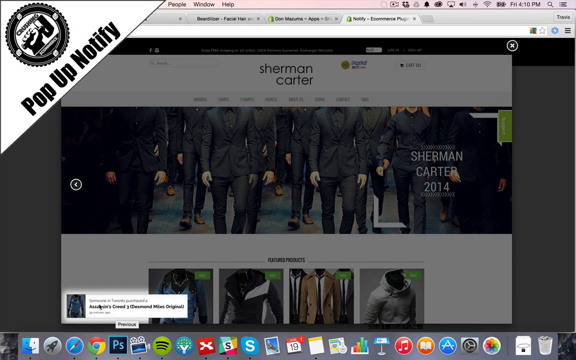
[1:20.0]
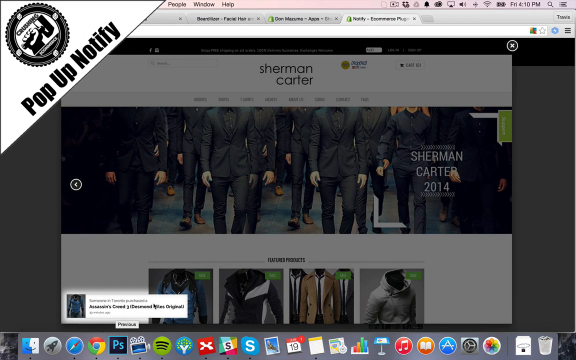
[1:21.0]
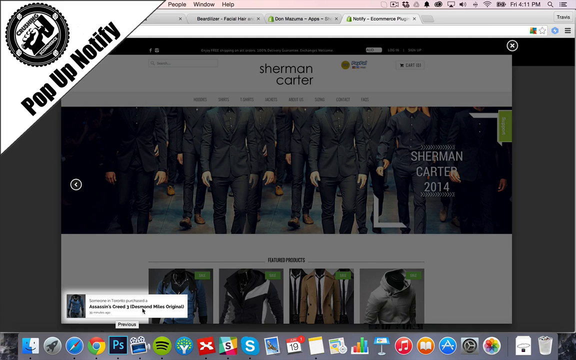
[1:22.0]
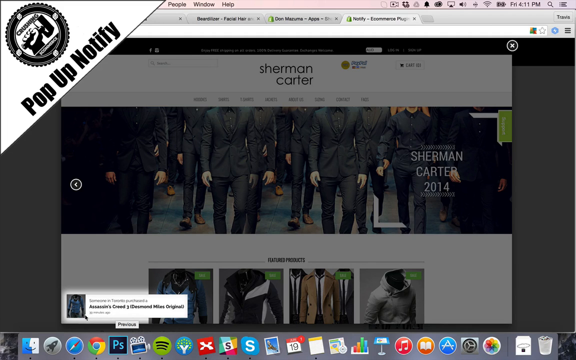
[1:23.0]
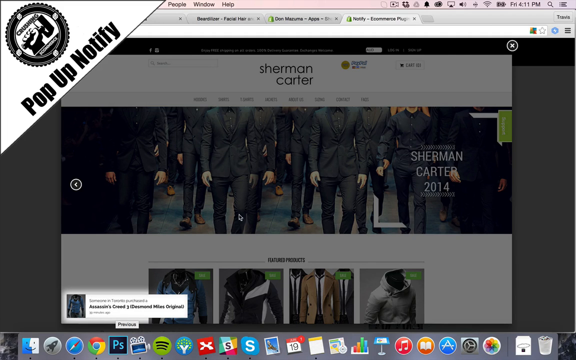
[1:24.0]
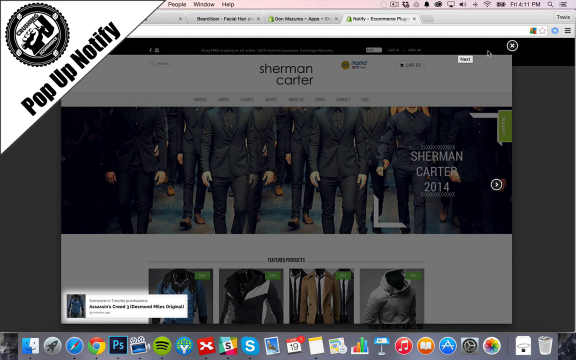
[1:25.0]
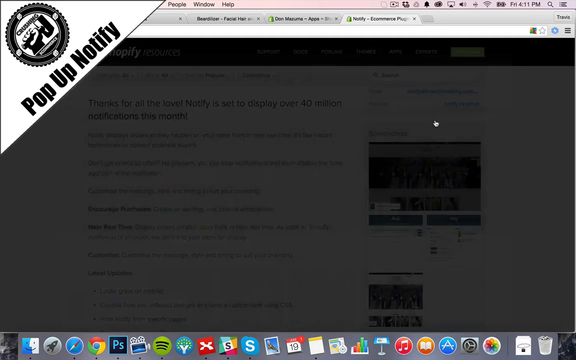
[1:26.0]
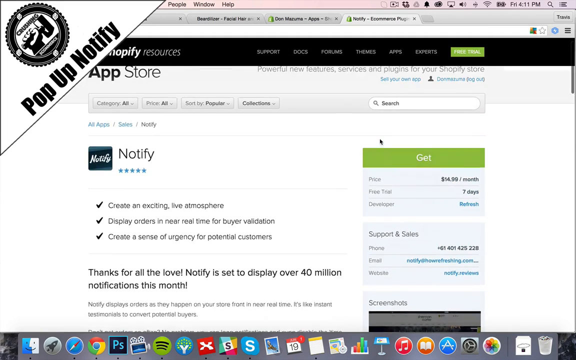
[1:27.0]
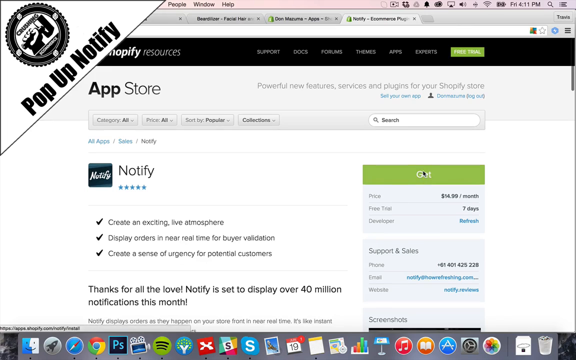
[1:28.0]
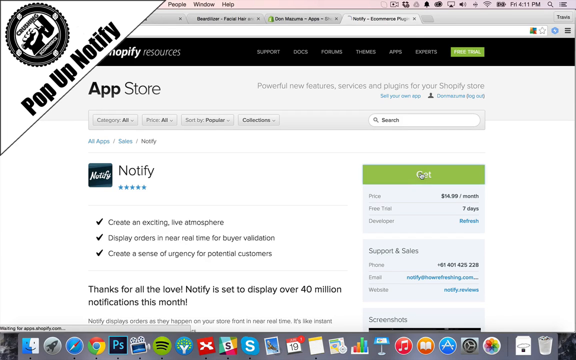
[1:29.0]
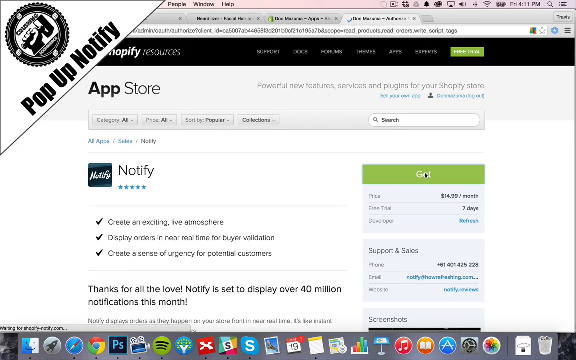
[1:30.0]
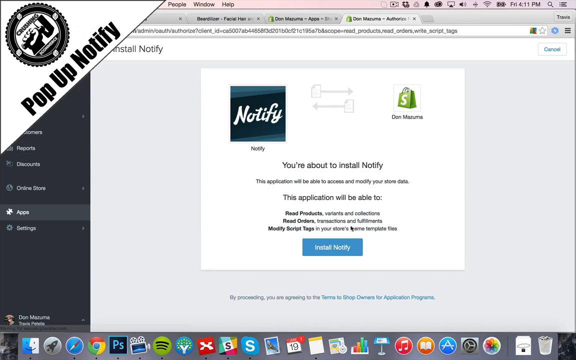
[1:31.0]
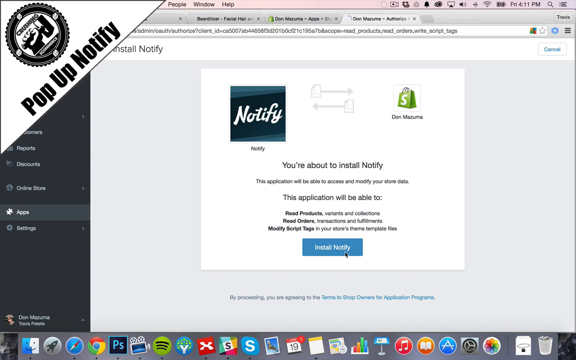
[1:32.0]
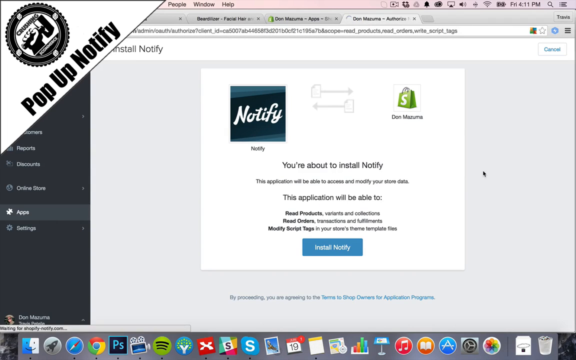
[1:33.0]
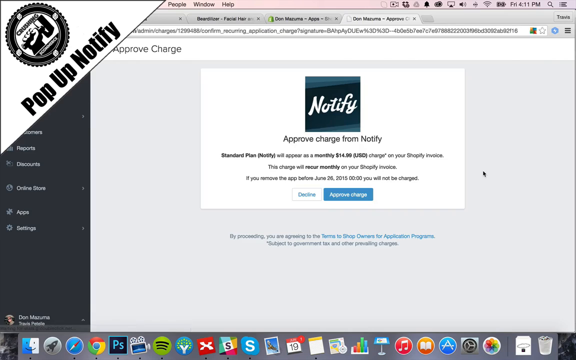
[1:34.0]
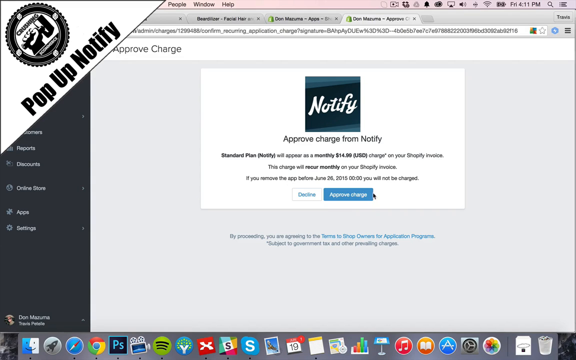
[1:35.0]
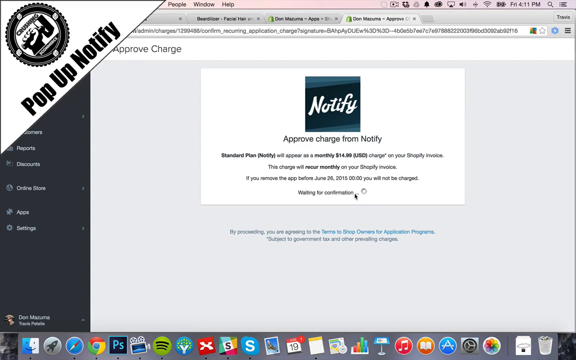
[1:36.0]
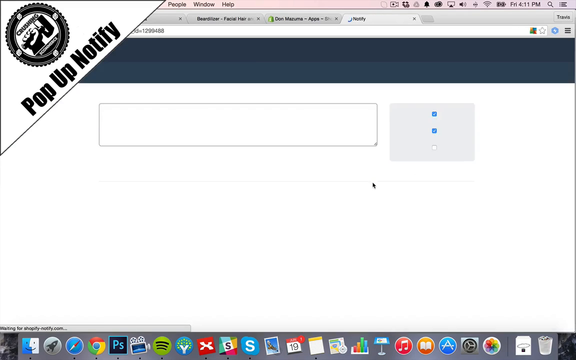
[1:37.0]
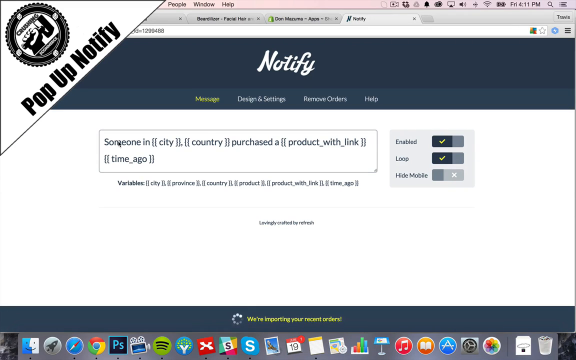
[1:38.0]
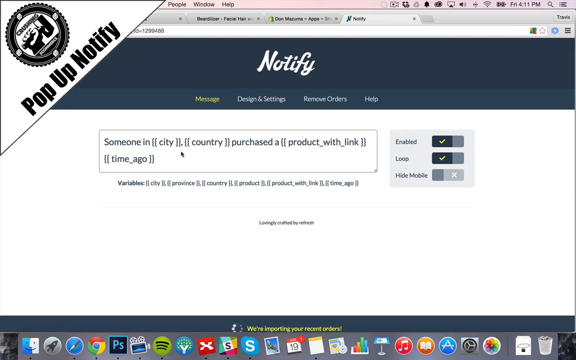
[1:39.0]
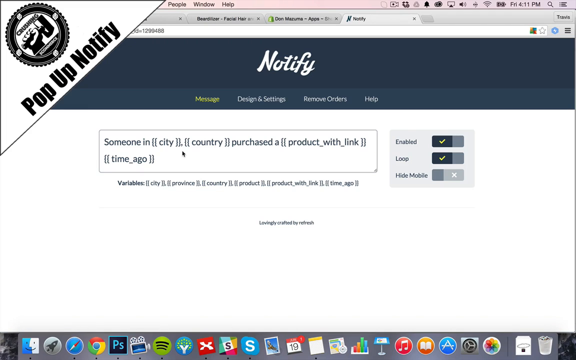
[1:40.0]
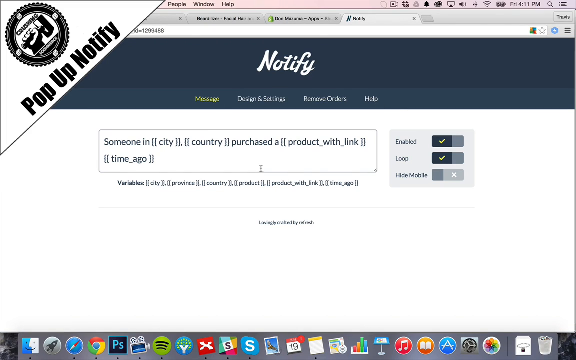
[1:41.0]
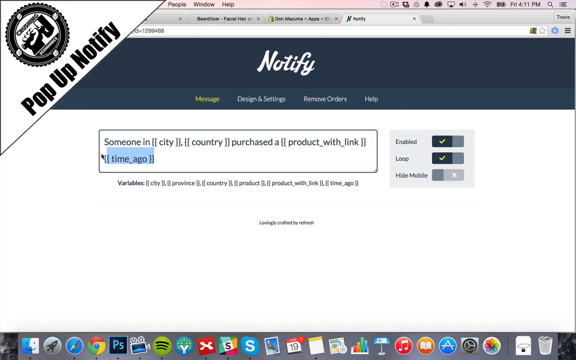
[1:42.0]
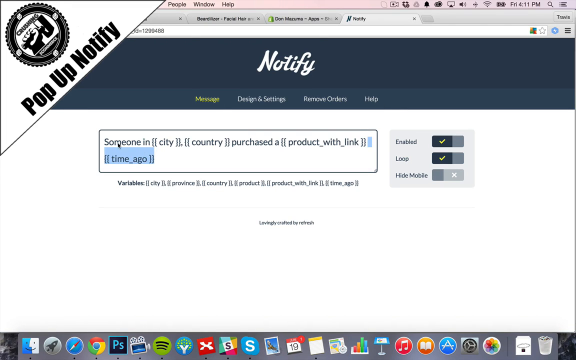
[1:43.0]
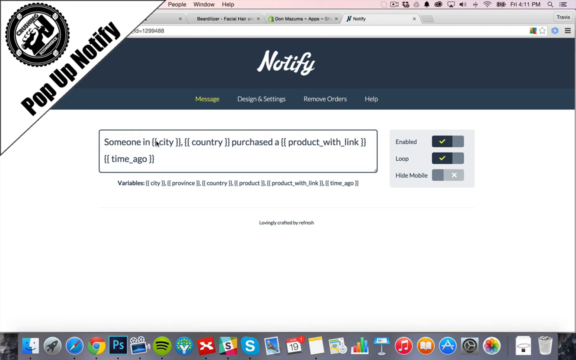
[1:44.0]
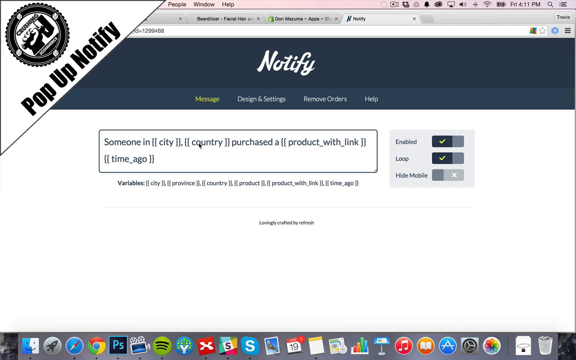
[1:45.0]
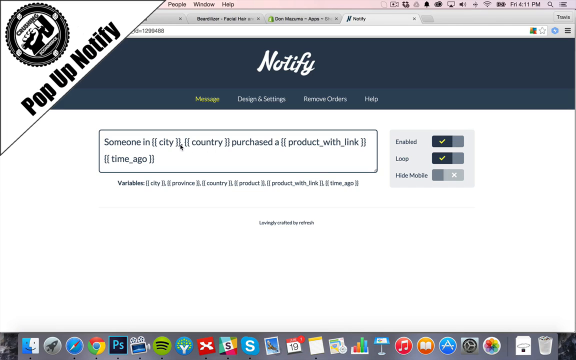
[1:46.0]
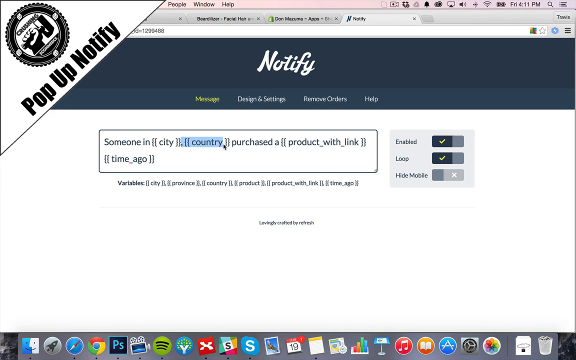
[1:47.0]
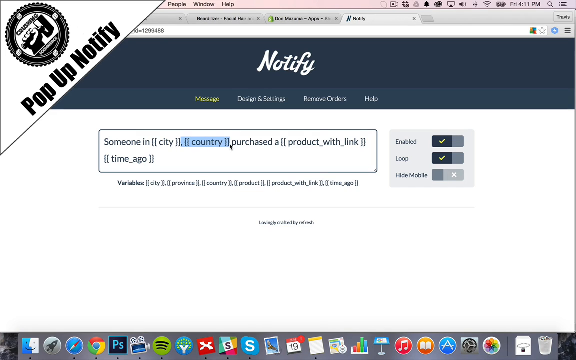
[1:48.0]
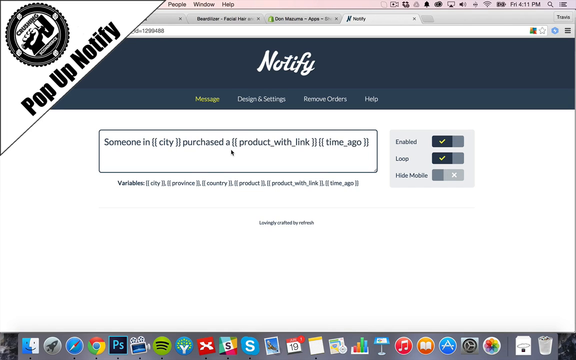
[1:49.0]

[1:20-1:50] The person goes to a page reading "Sherman Carter" in the middle. The top part of the screen shows men in tuxedos whose faces are not visible, apparently a clothing store. Underneath it reads "featuring products", with clothes shown. The mouse hovers over a pop-up that appears in the bottom left-hand corner. The person then goes back to the Notify app, which shows "Install Notify"; the mouse hovers over it, and the price appears to be $14.99 a month. An example notification reads that someone in "city, country" purchased a product, shown with a link, followed by the time ago.